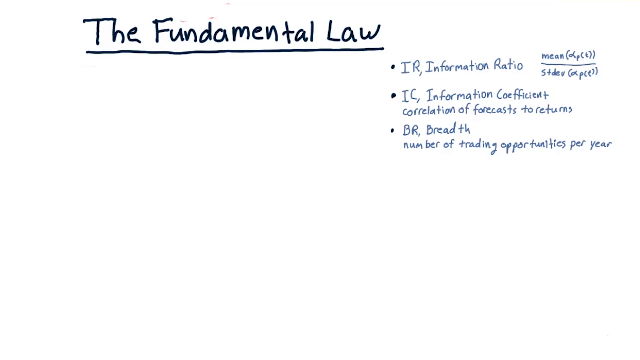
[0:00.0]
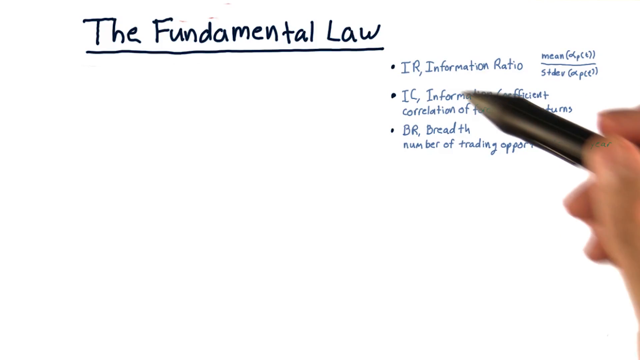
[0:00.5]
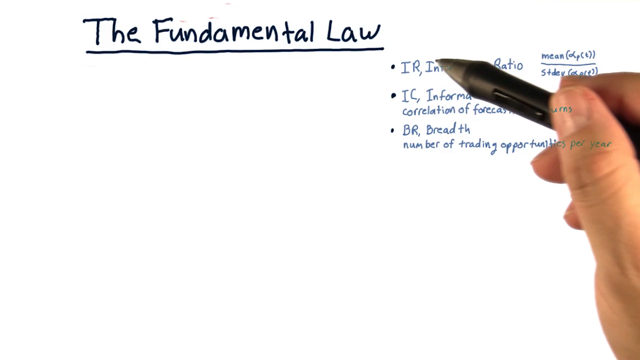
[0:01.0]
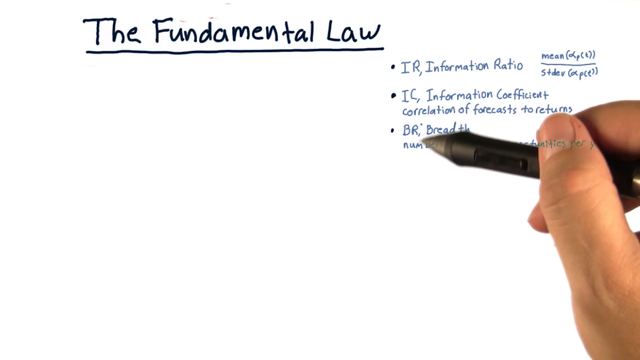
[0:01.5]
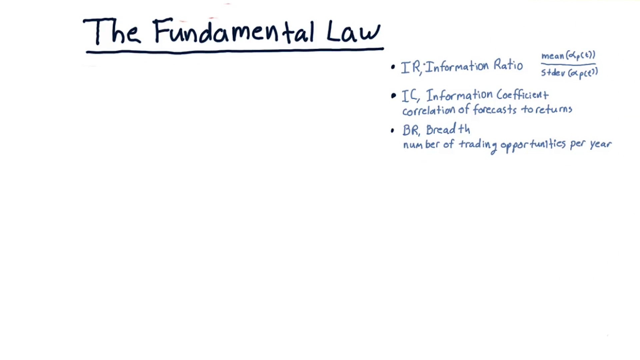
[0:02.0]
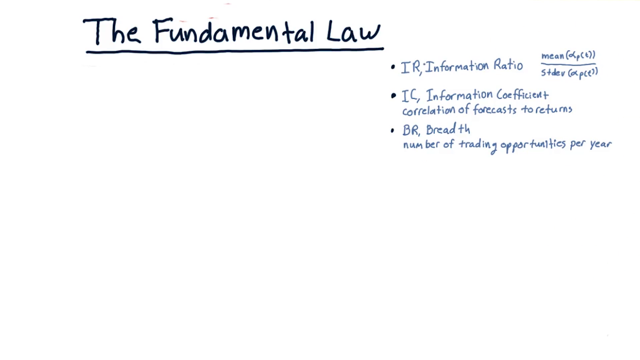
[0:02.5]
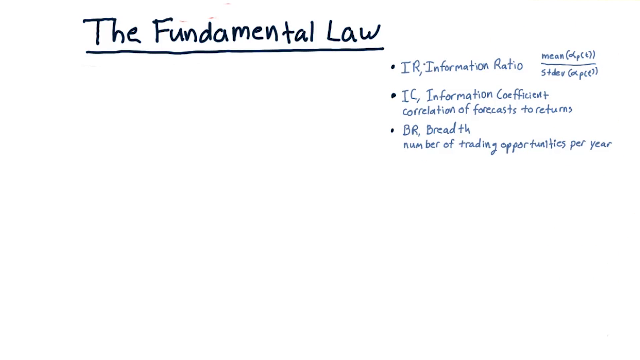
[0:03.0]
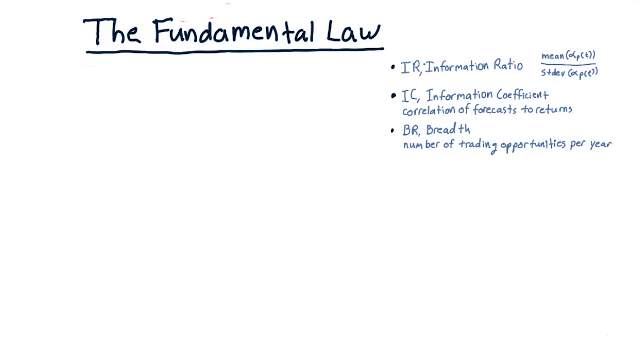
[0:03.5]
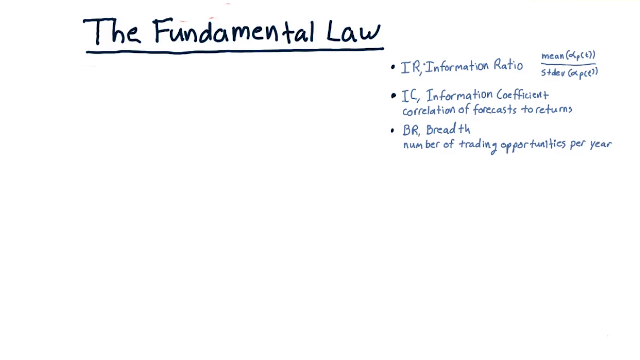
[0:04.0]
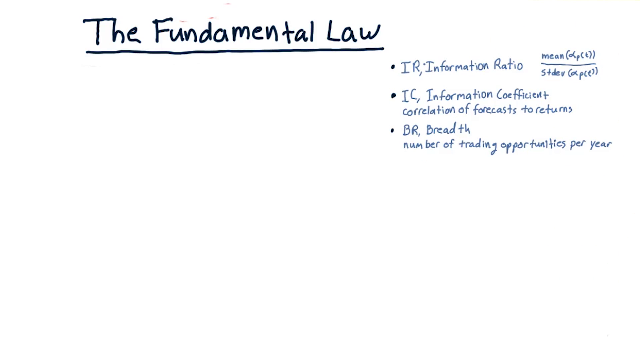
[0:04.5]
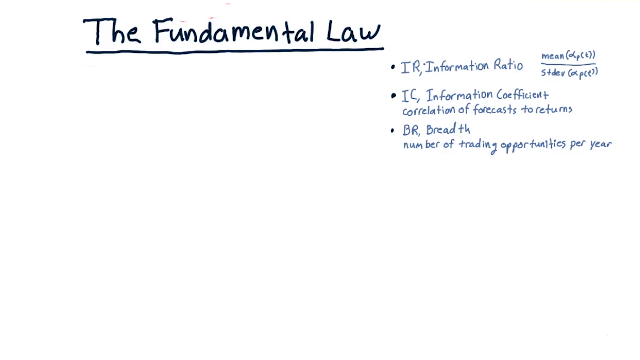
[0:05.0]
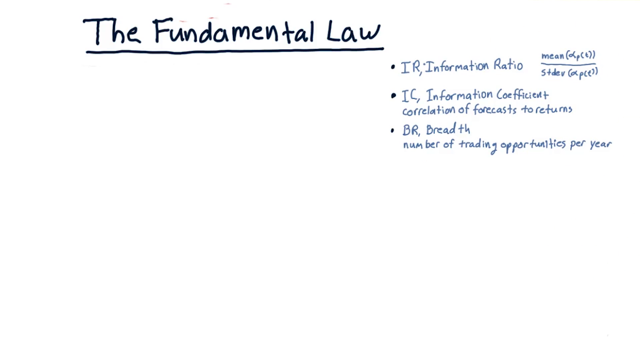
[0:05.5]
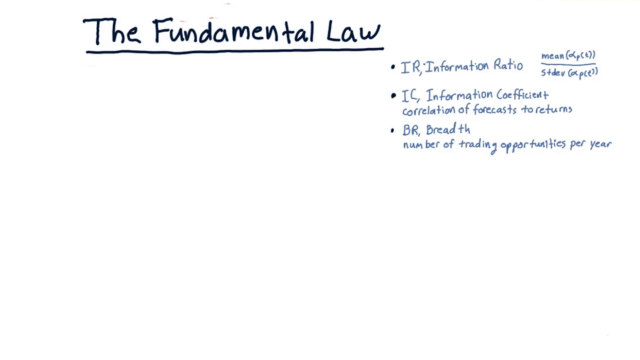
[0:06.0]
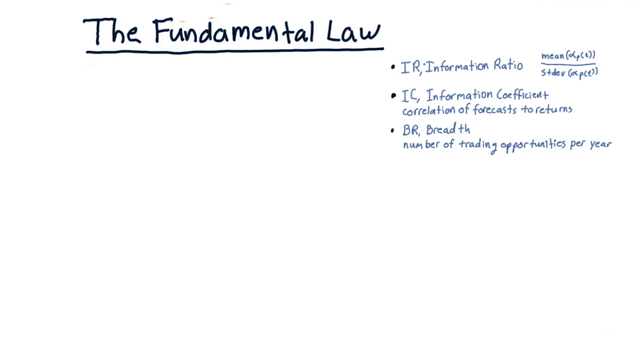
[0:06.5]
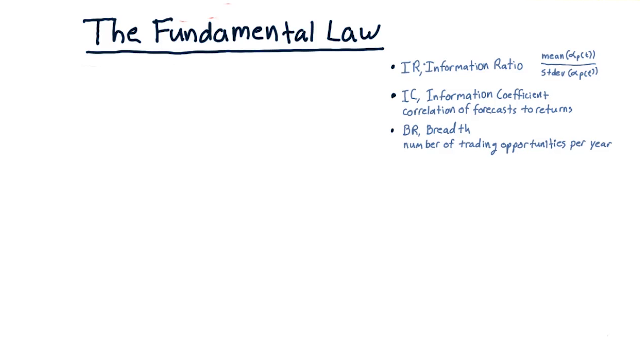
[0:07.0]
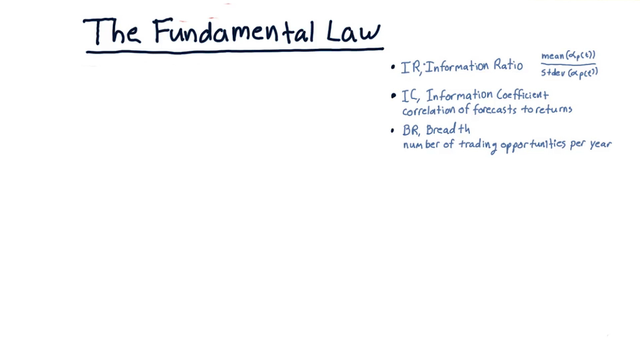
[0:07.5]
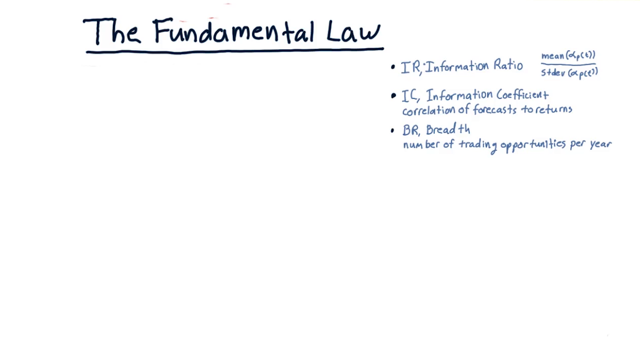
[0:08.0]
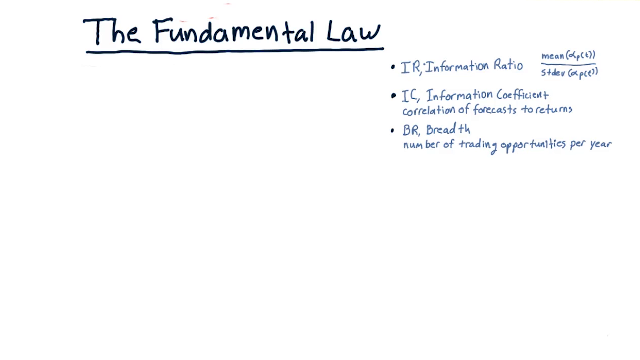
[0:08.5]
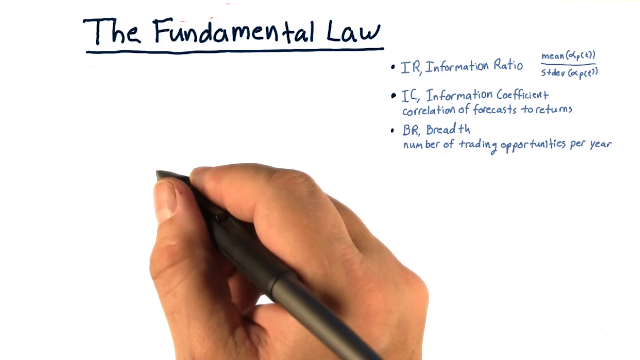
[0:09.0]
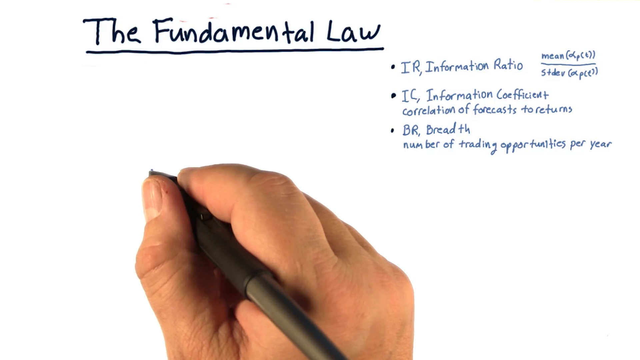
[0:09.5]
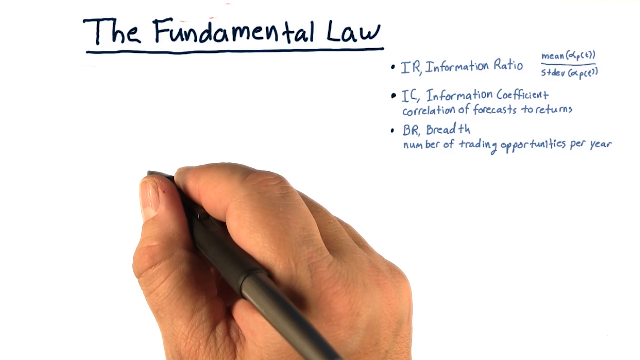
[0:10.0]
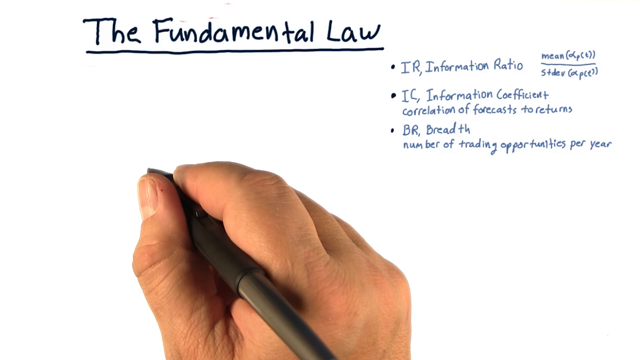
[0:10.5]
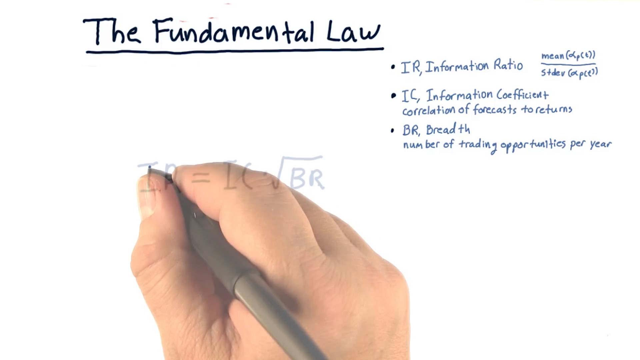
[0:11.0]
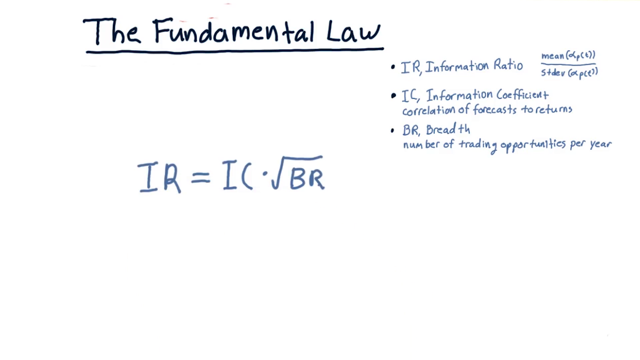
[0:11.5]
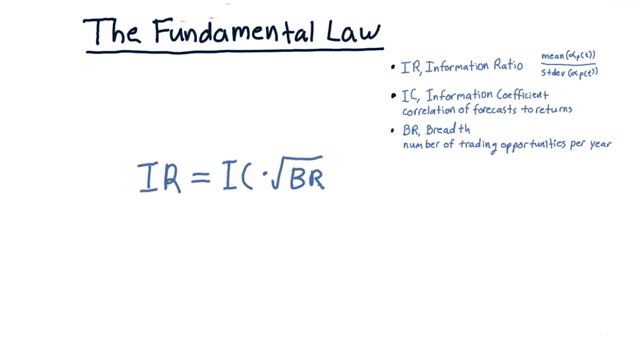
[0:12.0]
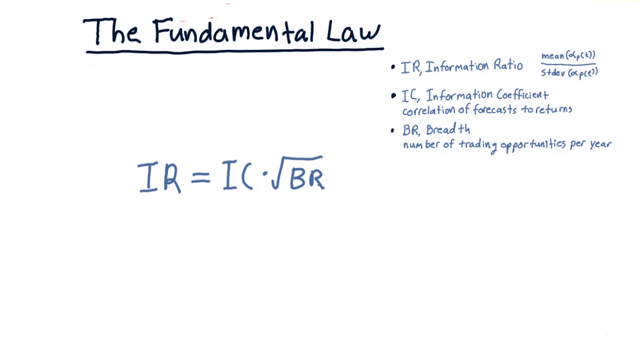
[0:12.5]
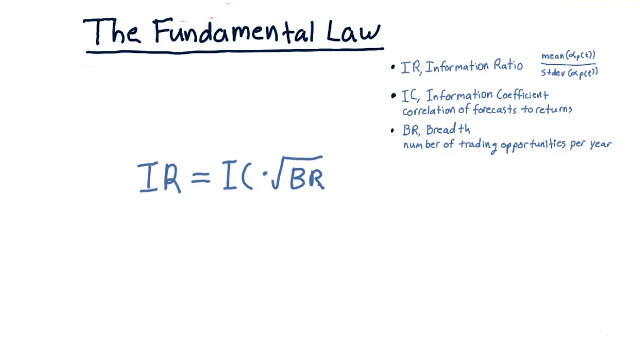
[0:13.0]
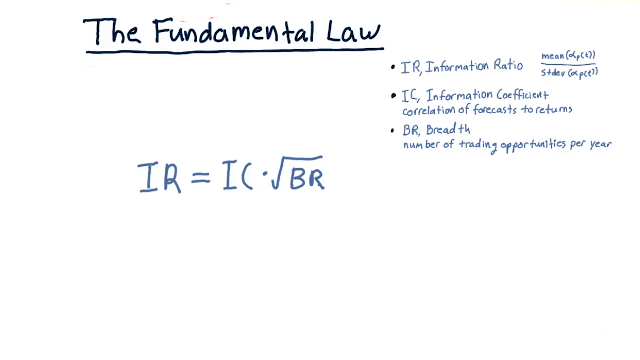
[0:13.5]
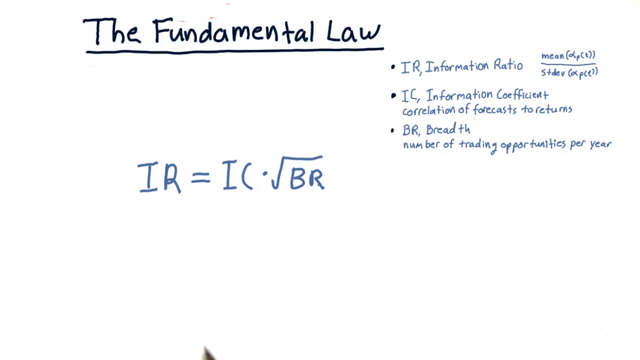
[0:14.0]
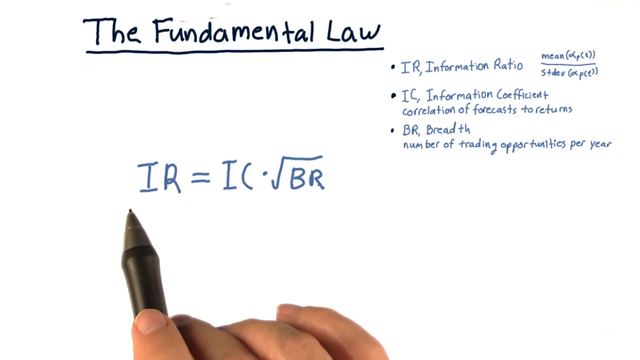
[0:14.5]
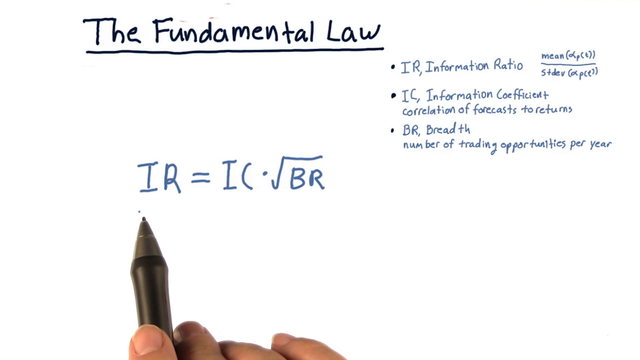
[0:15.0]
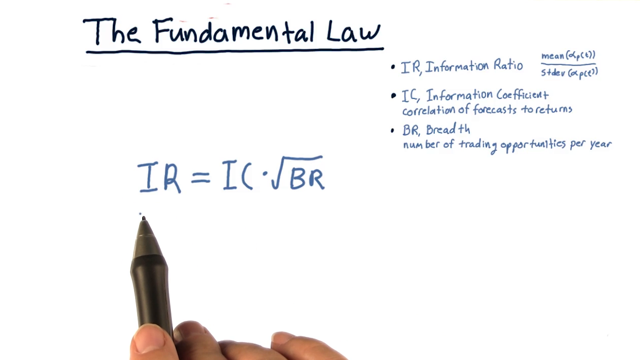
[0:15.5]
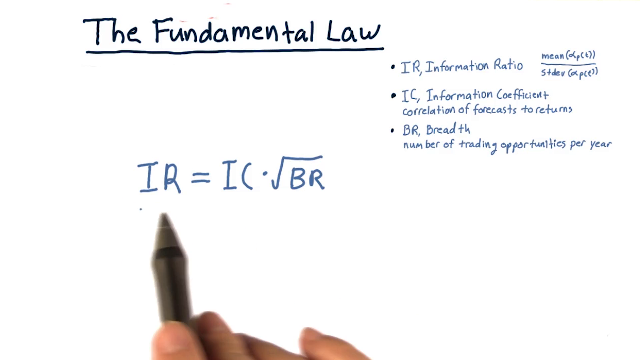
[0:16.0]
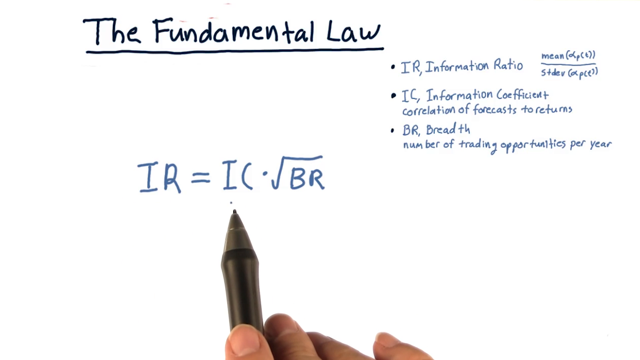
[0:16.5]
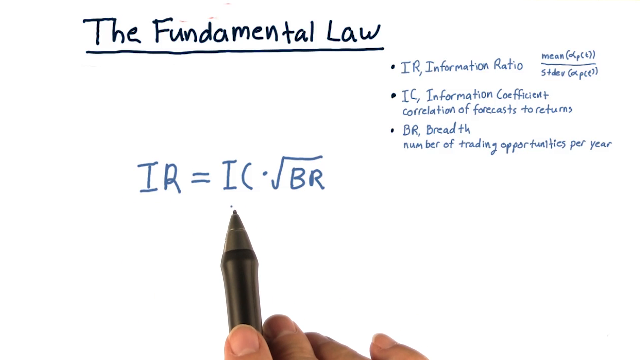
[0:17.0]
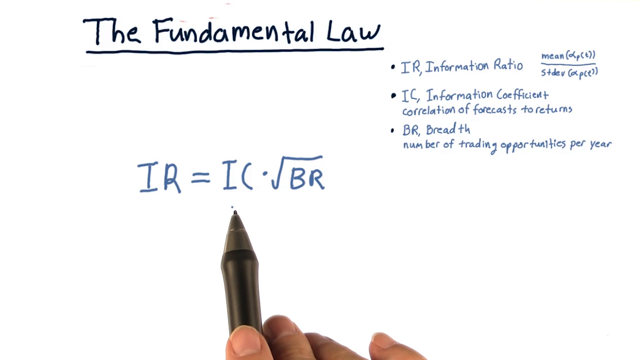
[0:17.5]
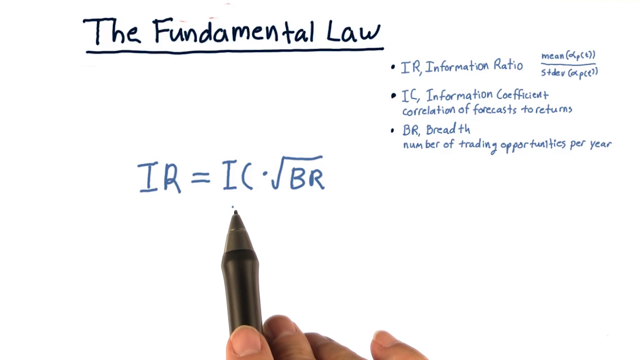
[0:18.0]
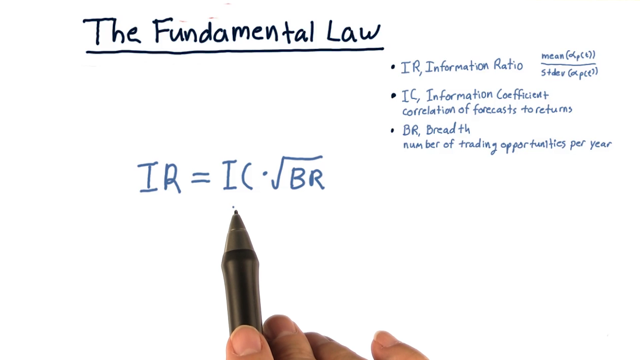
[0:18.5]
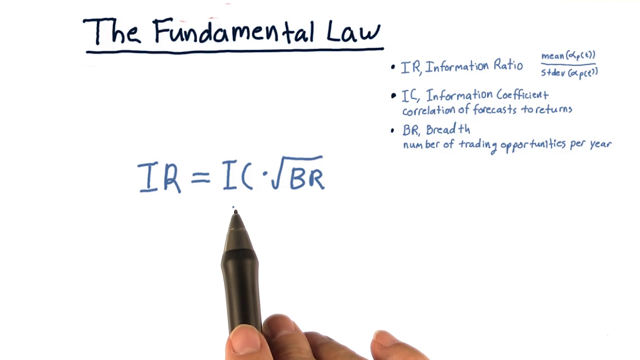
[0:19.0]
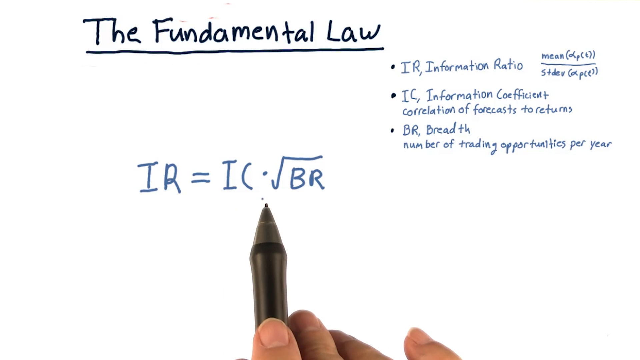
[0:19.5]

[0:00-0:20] Handwritten text reads "Fundamental Law," followed by a list of abbreviations and their meanings: IR is the information ratio, mean divided by standard, and IC is the information coefficient, correlation of forecast, along with a number of trading opportunities per year. On the board, IR is written as equal to IC. The writing is handwritten rather than typed, done with a pen on a piece of paper, or possibly with a digital pen on digital paper.